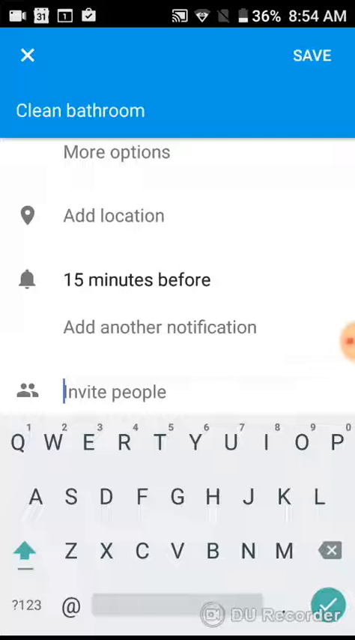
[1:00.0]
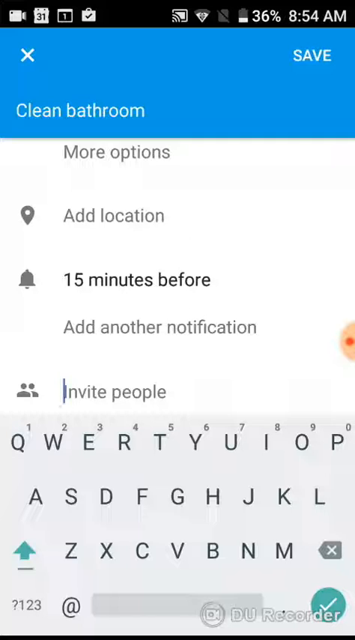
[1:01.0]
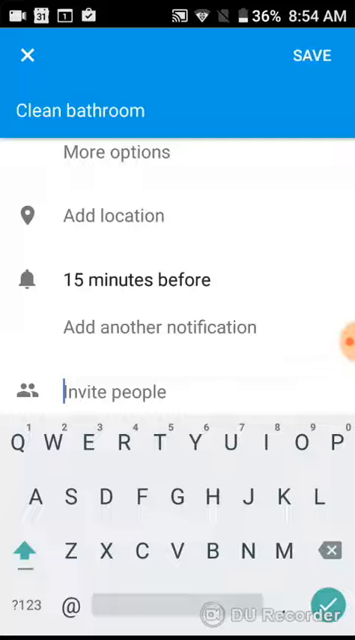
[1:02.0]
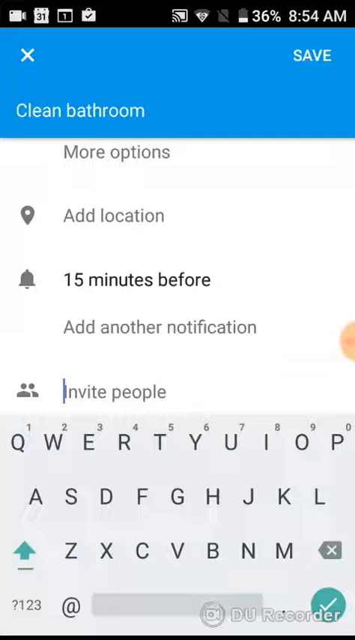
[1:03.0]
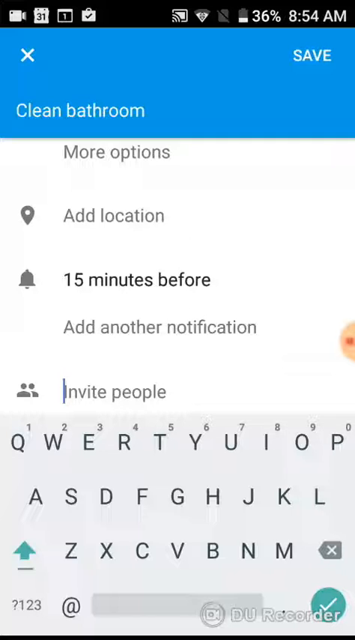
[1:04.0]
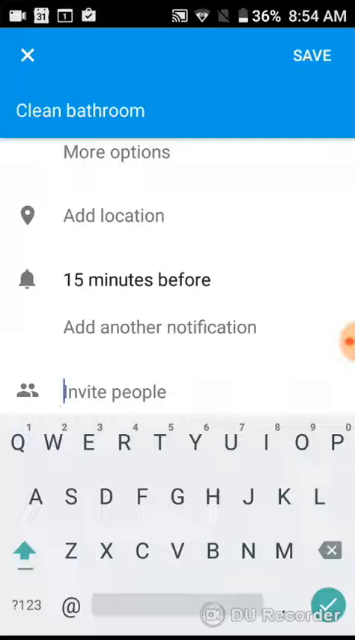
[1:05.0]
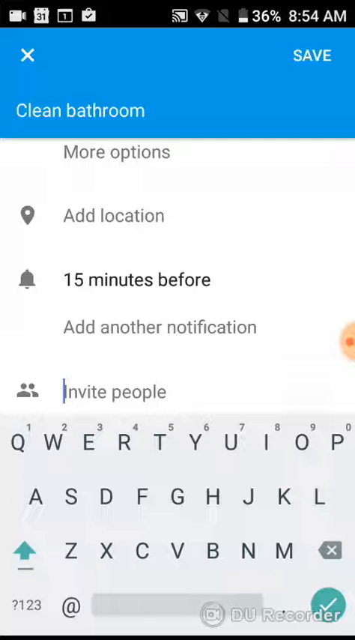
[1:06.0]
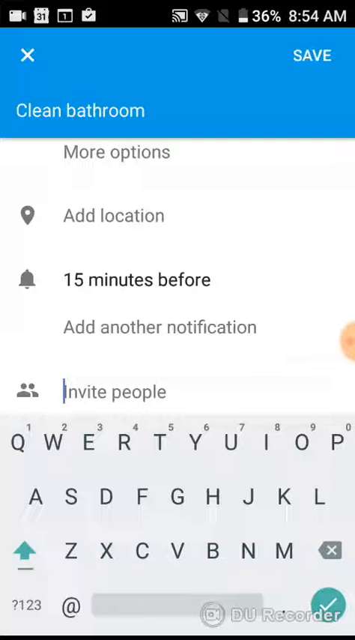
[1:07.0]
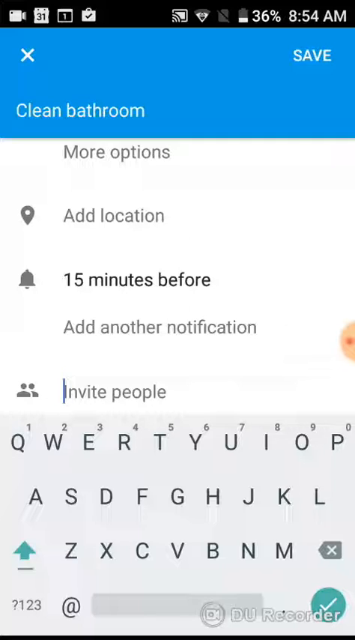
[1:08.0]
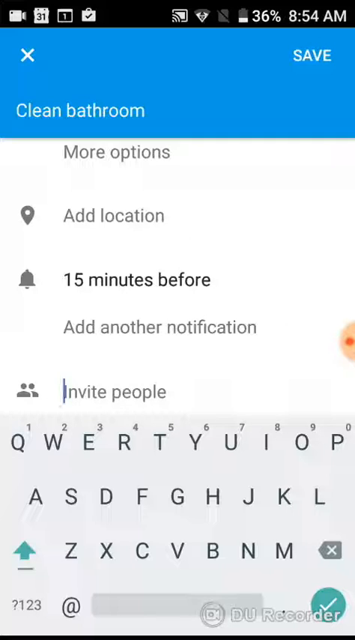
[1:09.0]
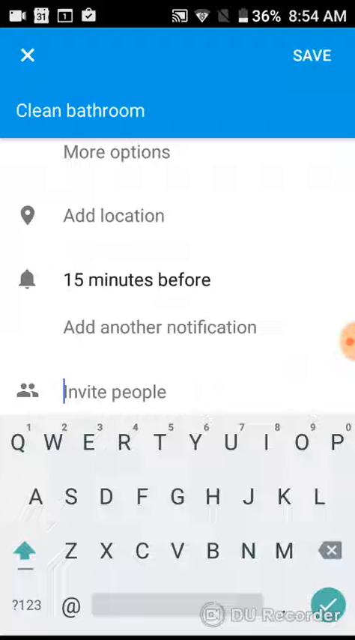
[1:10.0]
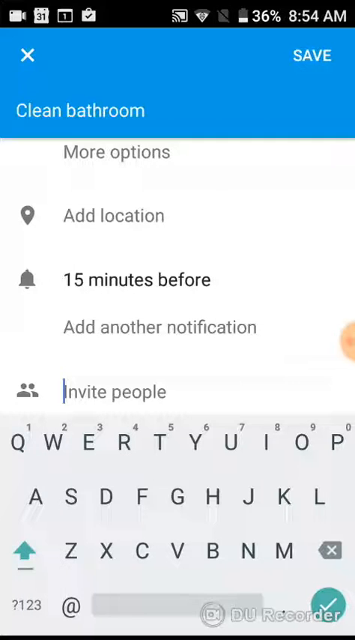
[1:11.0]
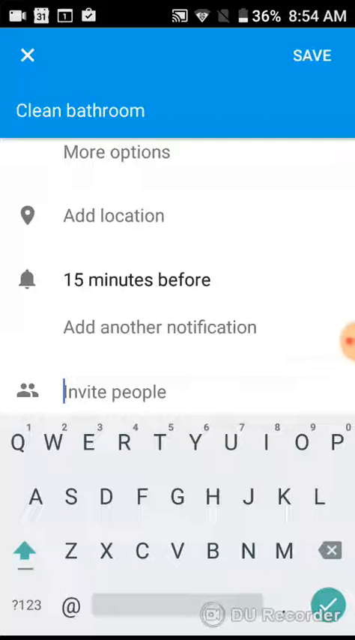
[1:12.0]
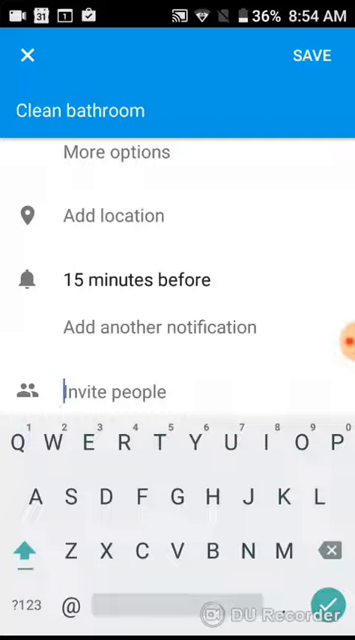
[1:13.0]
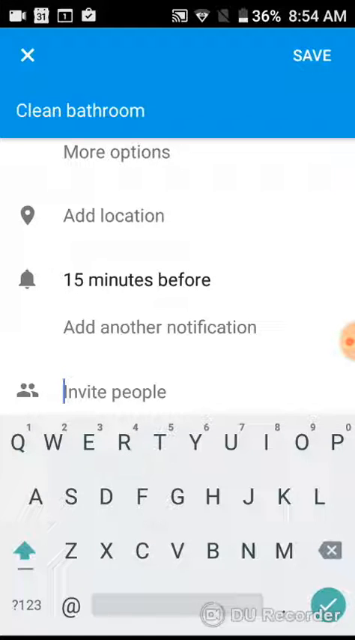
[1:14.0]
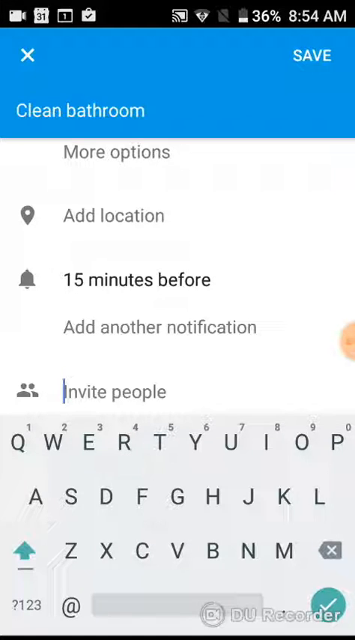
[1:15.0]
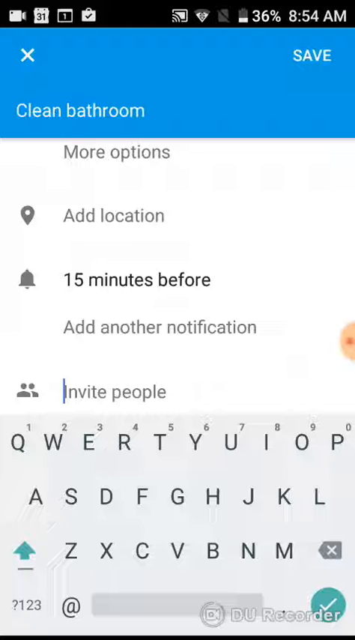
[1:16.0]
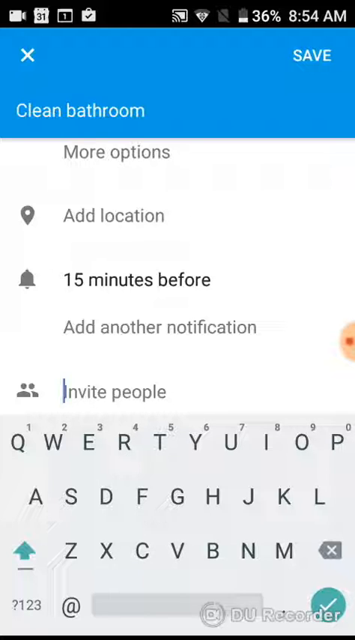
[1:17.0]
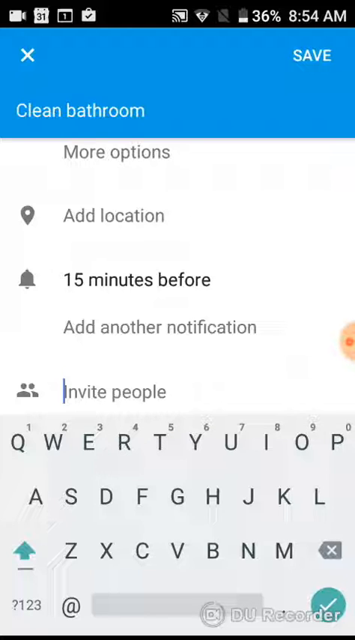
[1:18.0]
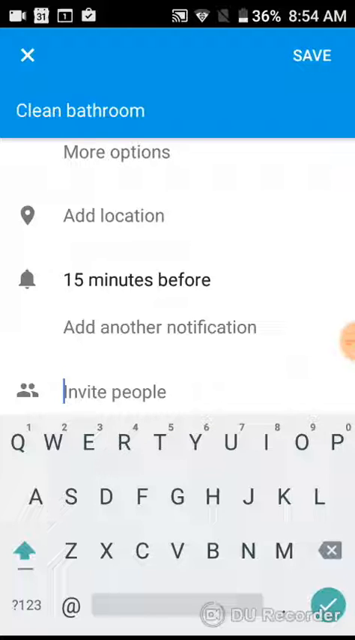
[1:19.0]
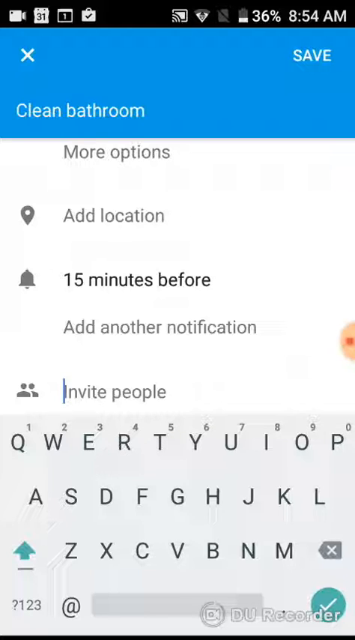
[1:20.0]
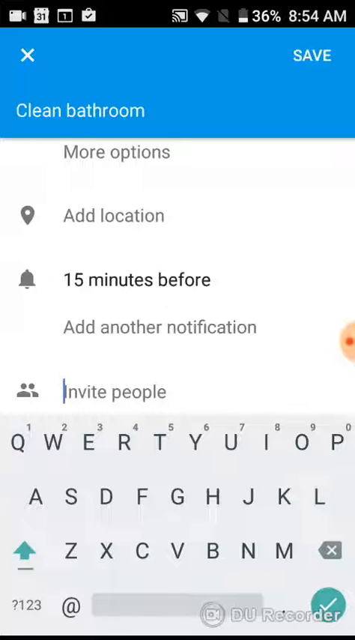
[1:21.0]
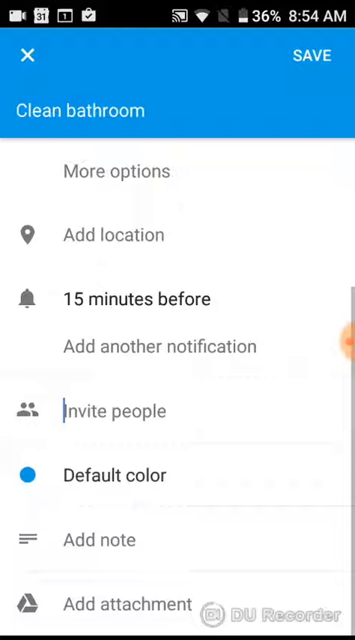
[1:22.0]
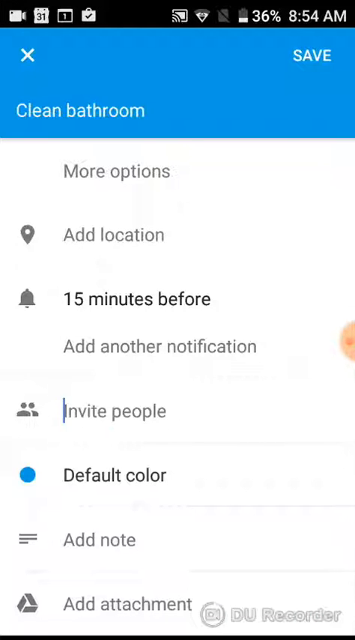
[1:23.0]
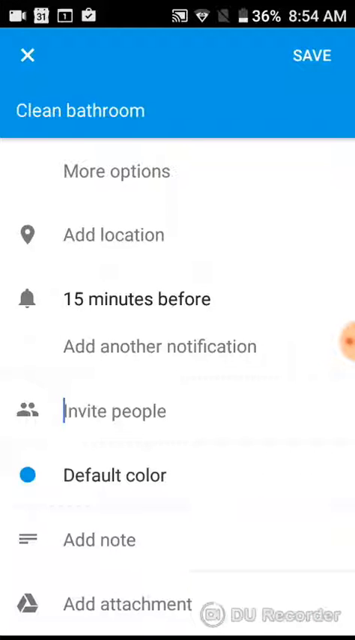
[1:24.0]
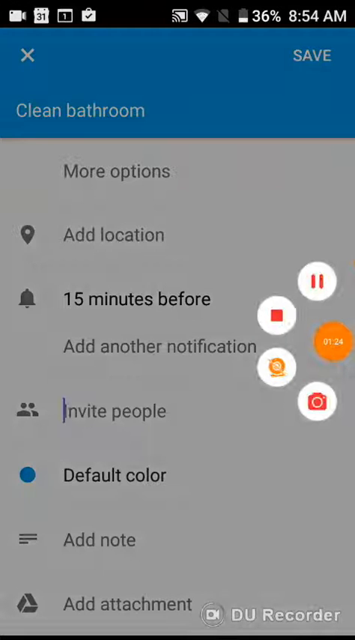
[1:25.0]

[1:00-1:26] The clean bathroom event is now set for 6pm. Nothing changes on the screen for a while: the invite option is open, but no email has been added yet. The recording ends without the user pressing save. The phone runs Android and might be a Google Pixel, since the other apps shown are Google apps and the search bar is Google. Most of the interface is light blue. On the keyboard there is a light green all caps button and a green checkmark bar.